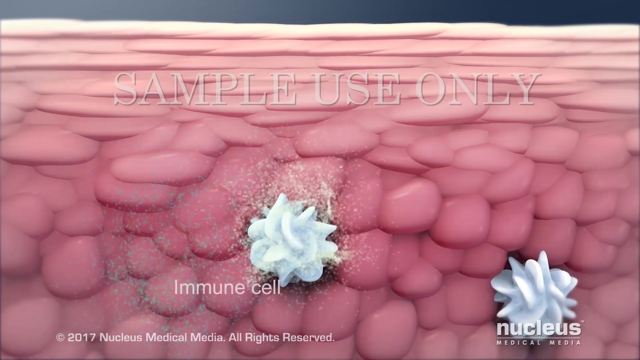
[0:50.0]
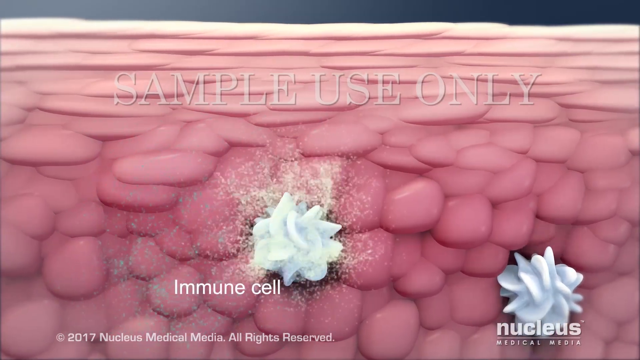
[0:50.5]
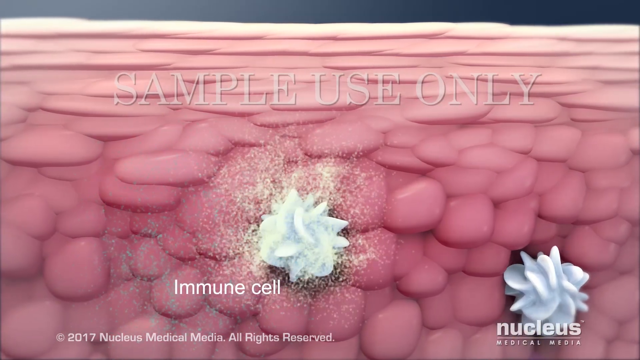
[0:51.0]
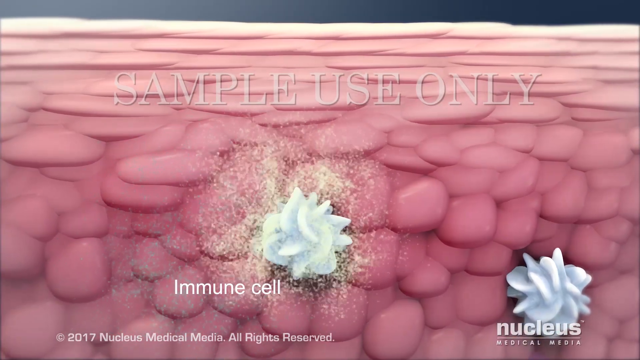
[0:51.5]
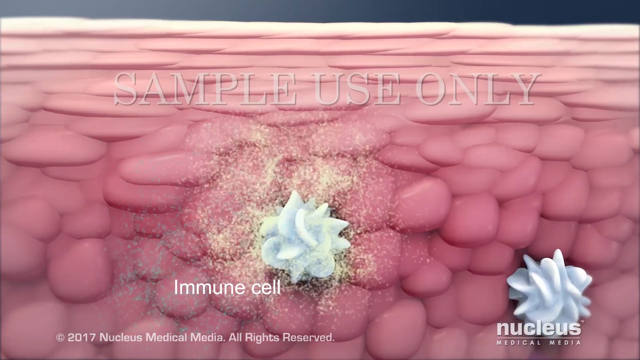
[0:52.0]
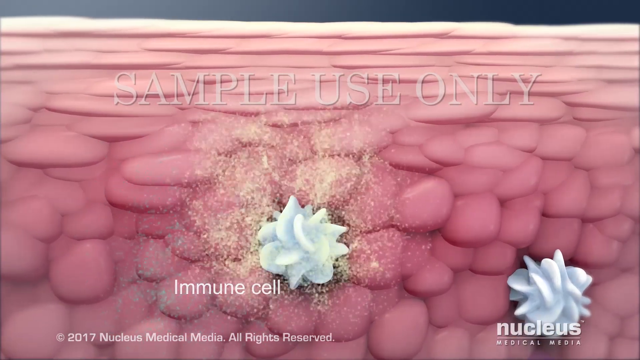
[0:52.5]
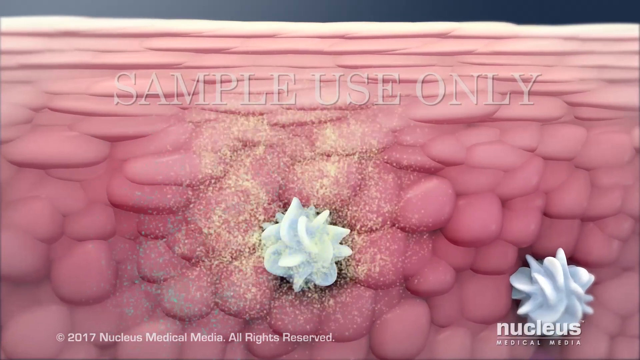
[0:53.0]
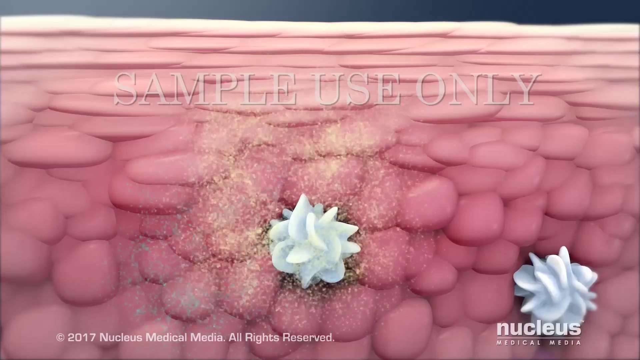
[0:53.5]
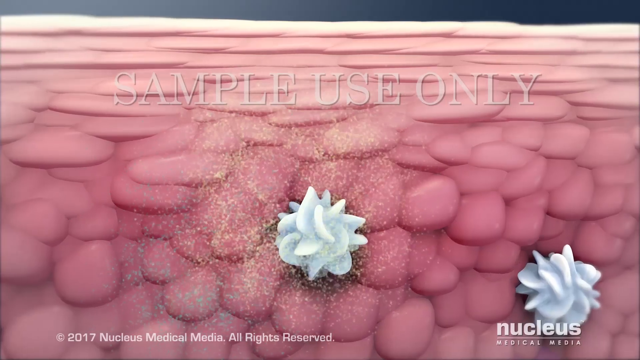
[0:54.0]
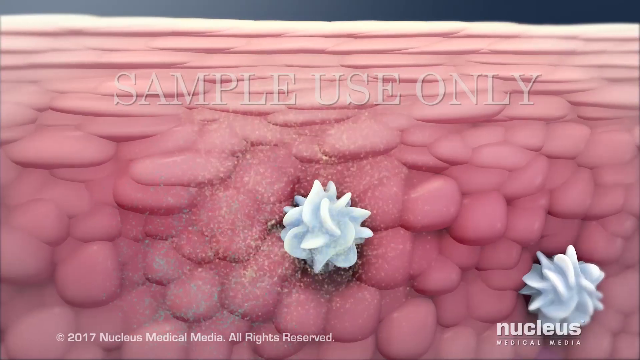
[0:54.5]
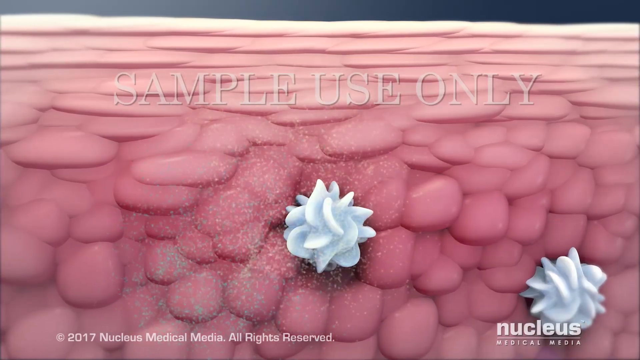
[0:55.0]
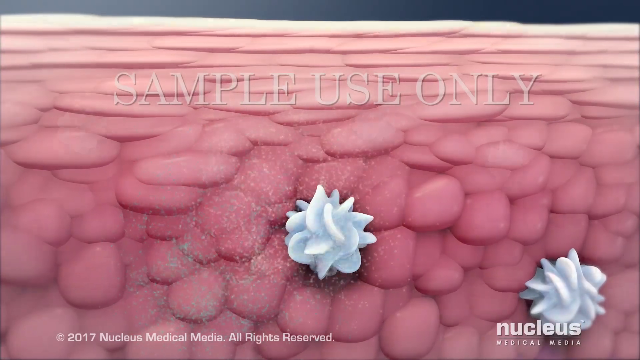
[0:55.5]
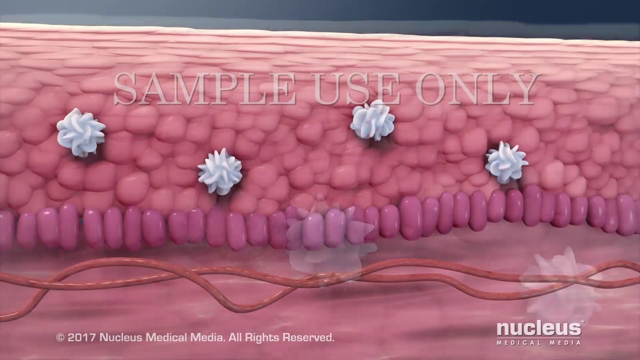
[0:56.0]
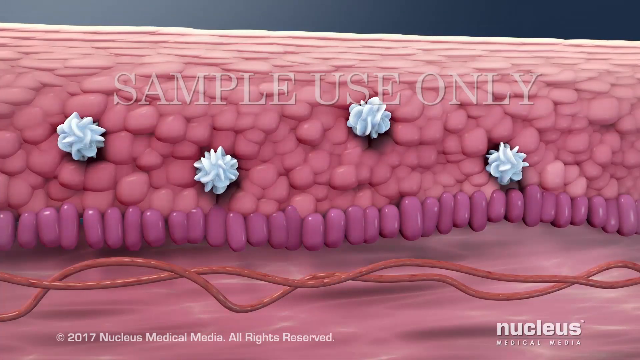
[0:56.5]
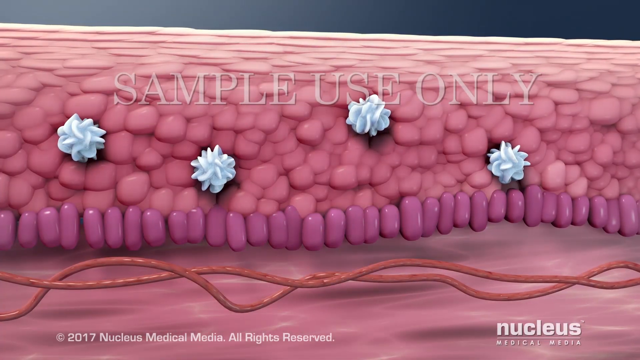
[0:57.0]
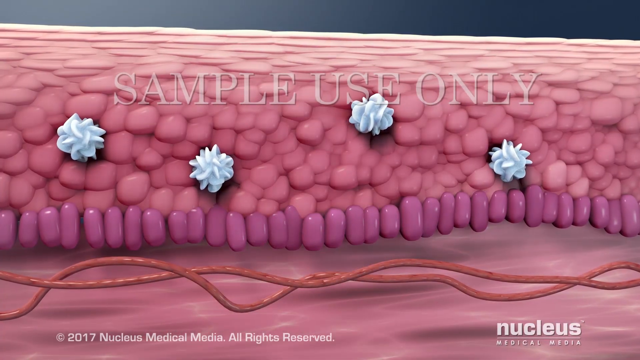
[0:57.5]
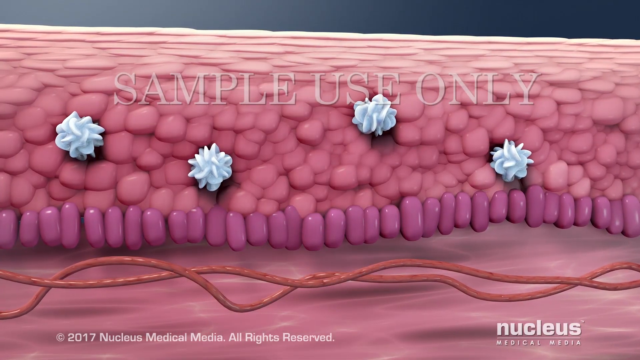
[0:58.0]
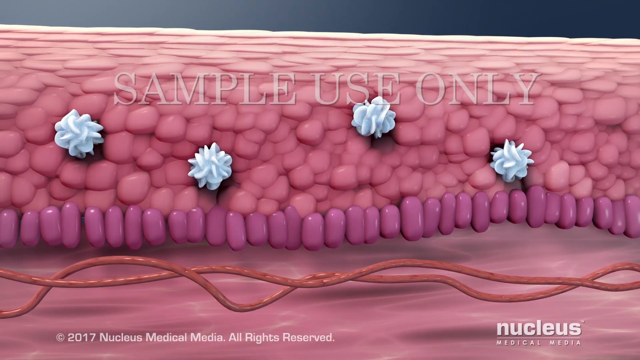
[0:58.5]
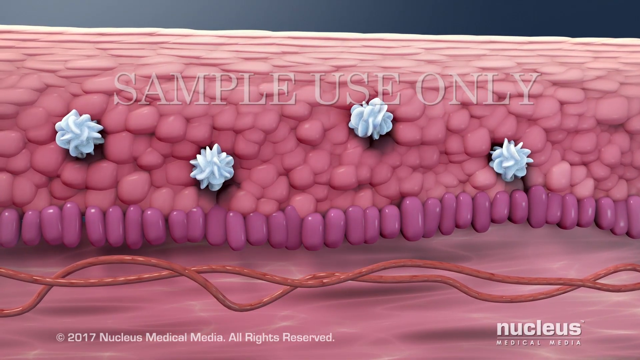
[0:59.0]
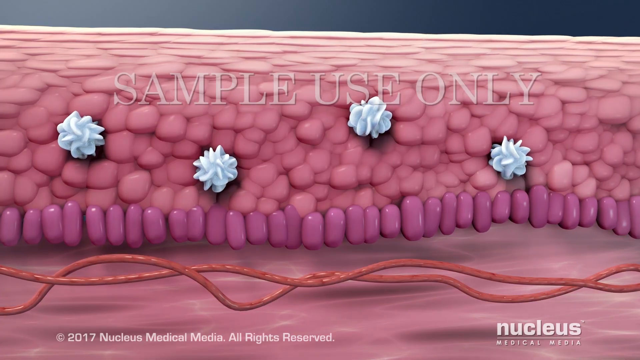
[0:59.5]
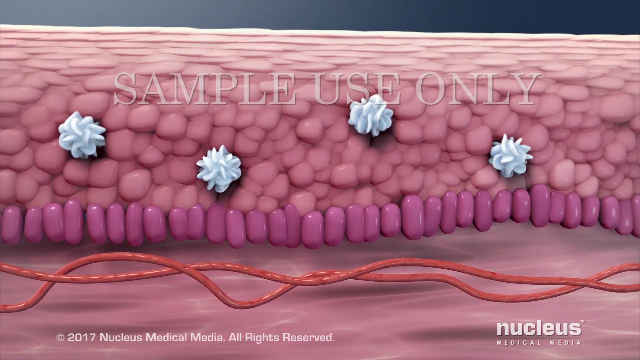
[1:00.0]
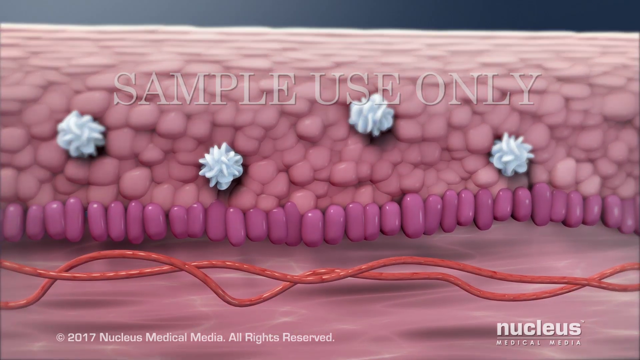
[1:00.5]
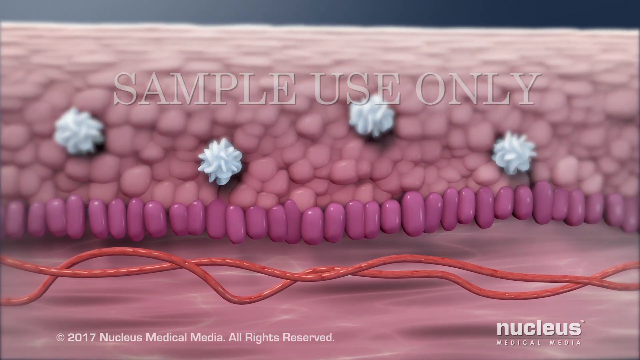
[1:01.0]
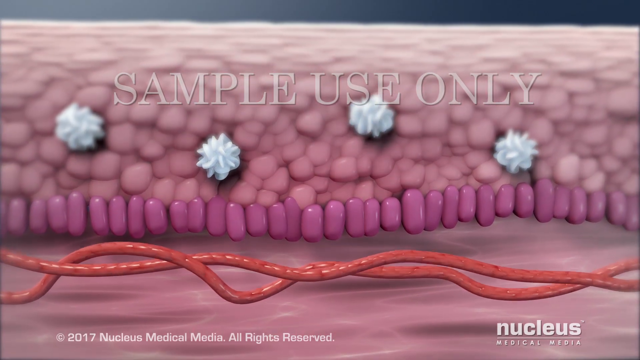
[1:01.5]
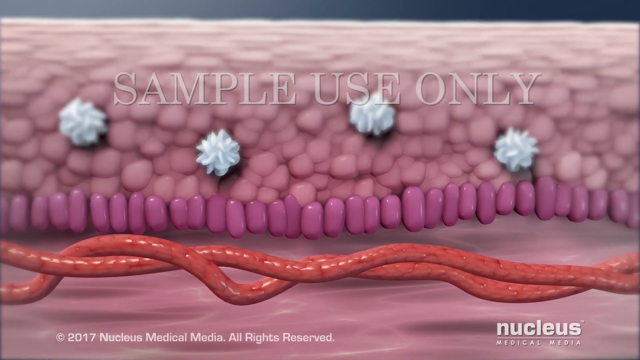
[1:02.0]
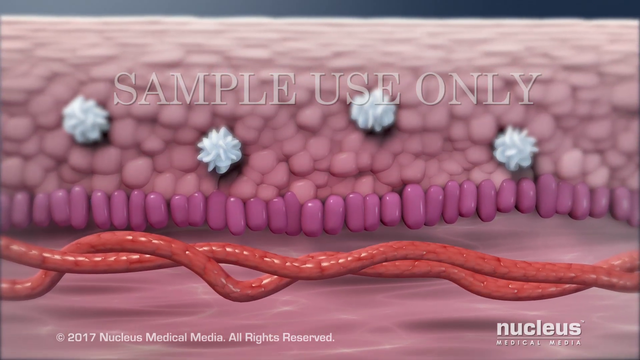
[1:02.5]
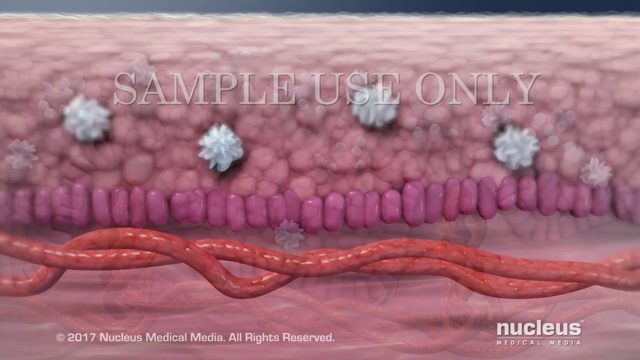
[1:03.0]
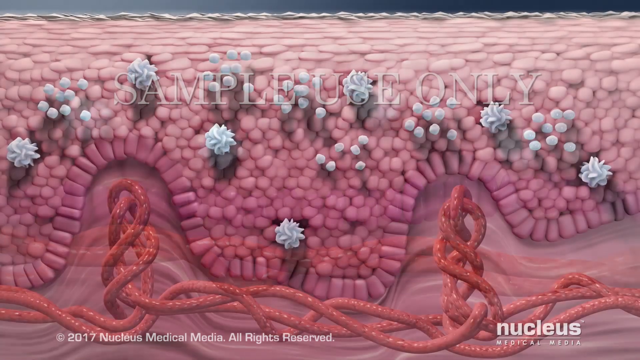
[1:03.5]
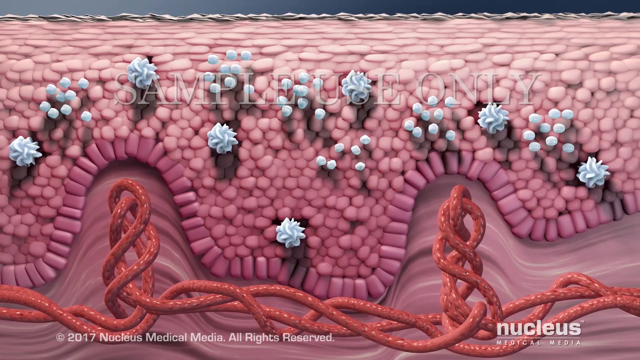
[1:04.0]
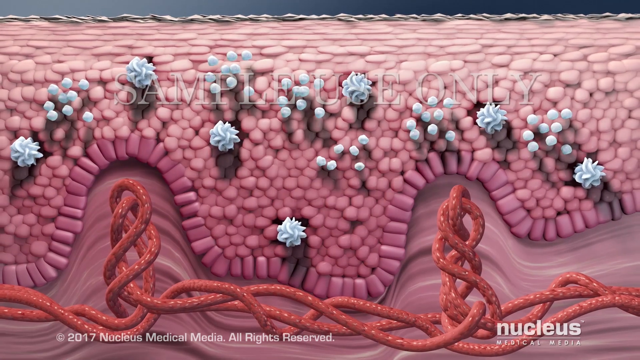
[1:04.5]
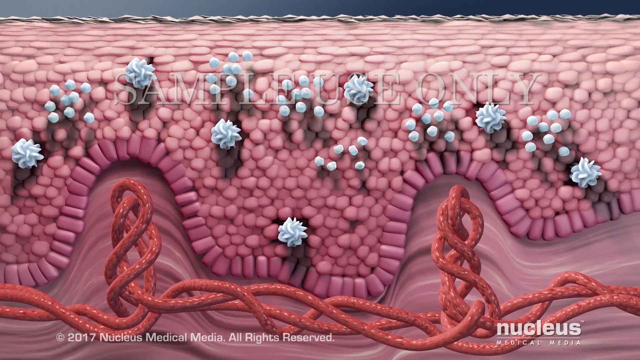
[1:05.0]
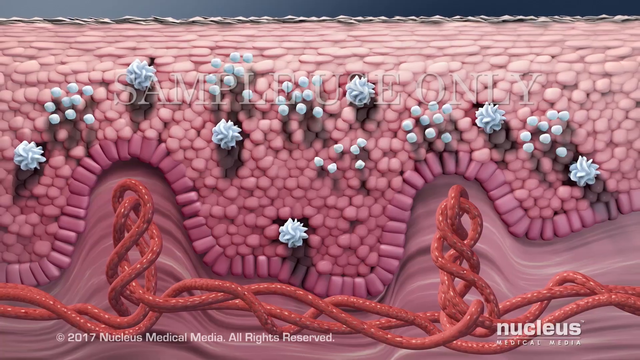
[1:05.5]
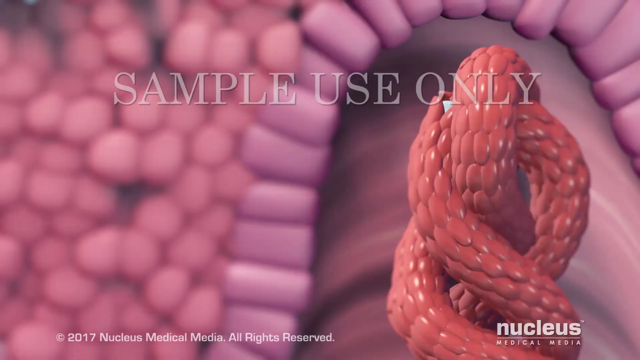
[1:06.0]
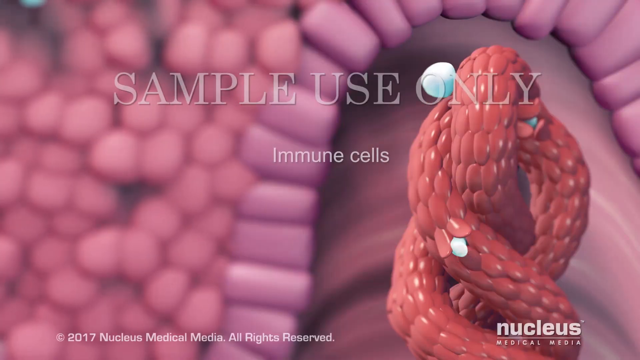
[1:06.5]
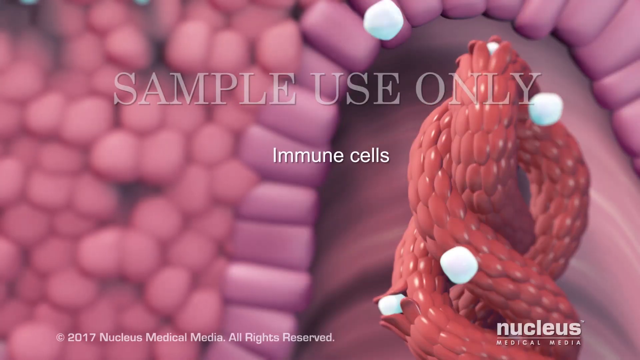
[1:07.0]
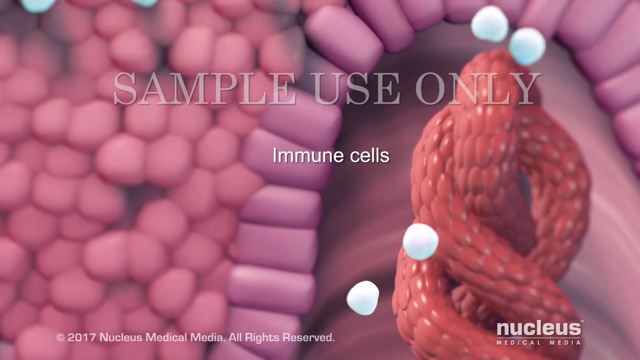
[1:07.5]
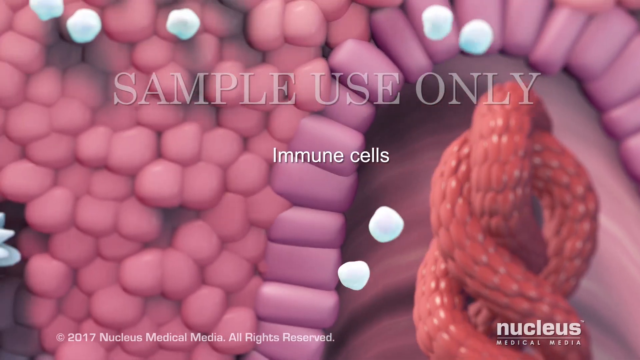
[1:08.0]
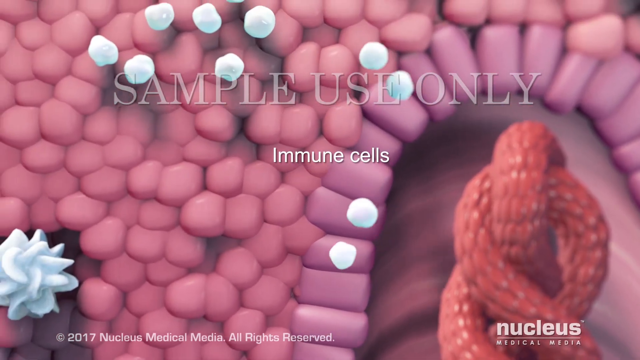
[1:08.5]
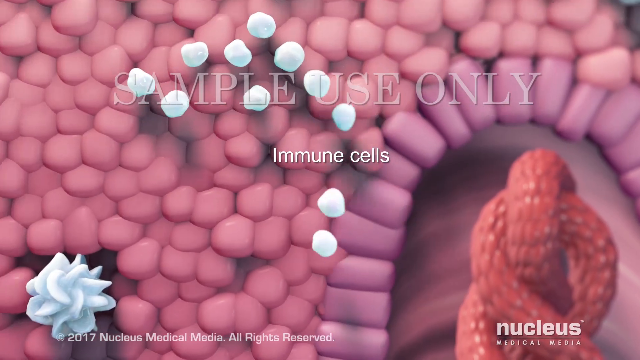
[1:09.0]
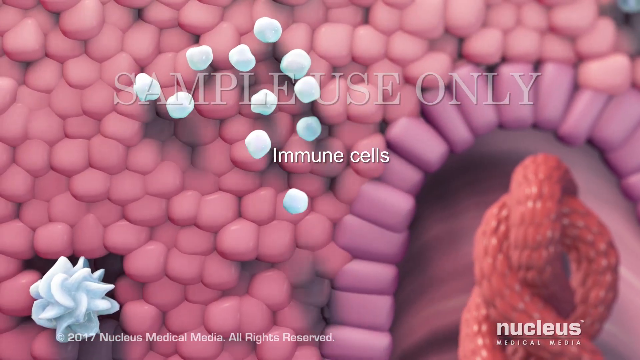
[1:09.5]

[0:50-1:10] An immune cell appears, and it seems to spread something to the skin cells, possibly around it. Multiple ones are shown, followed by what looks like blood veins swelling or knotting. Text then reads "the immune cells continue," possibly referring to attacking the bacteria or virus. The animation continues to show how the infection works and what happens to the skin or the tissue underneath, with these cells and possibly the body's response as it tries to attack the infection. The words "sample use only" are still overlaid on top of the video.